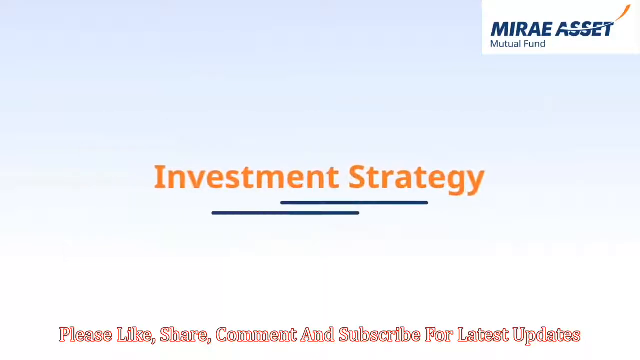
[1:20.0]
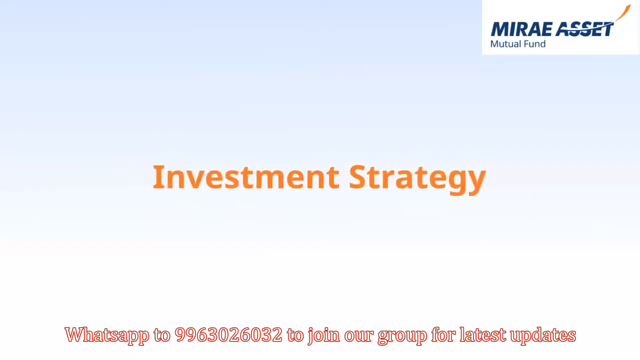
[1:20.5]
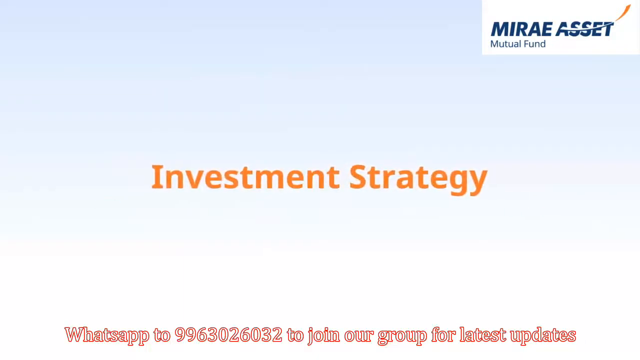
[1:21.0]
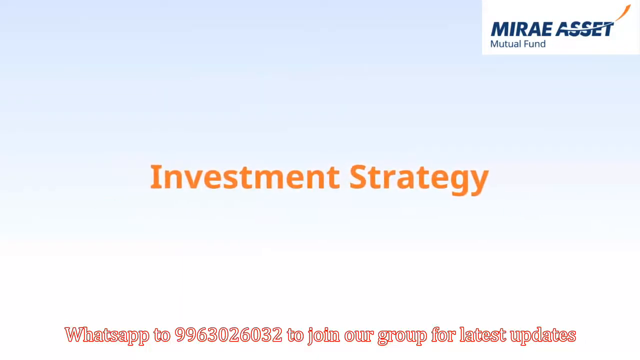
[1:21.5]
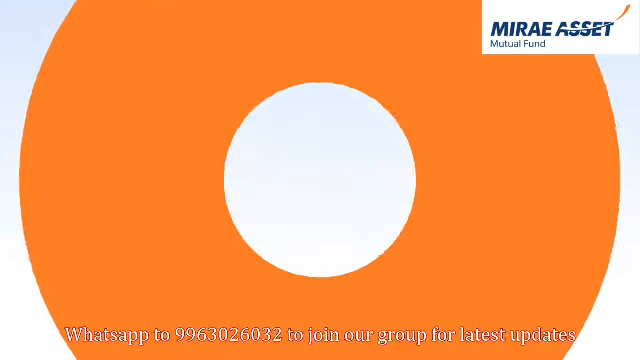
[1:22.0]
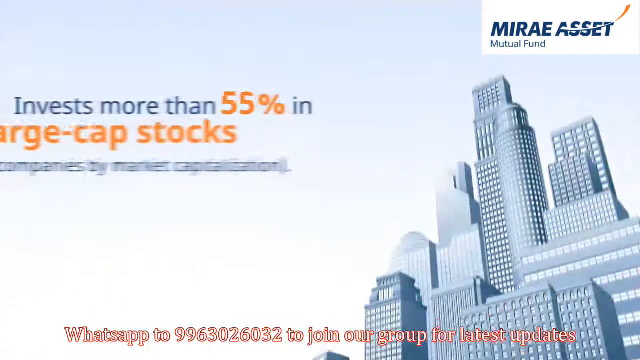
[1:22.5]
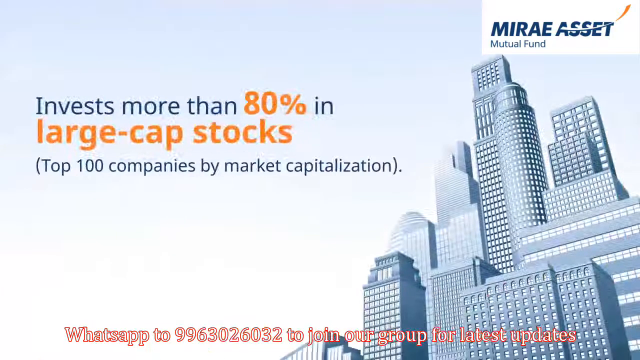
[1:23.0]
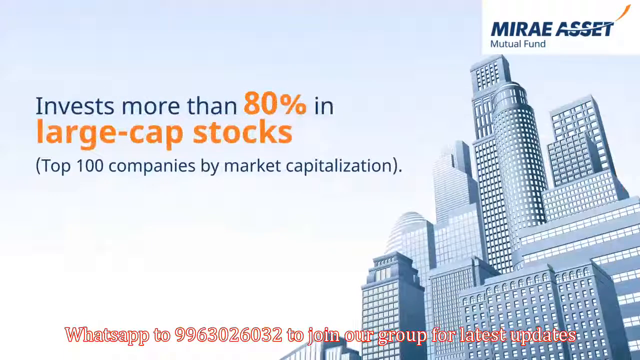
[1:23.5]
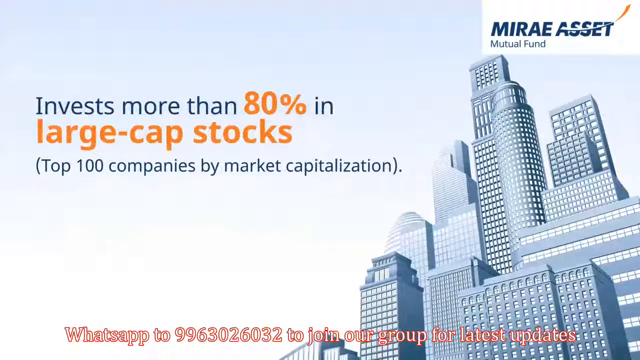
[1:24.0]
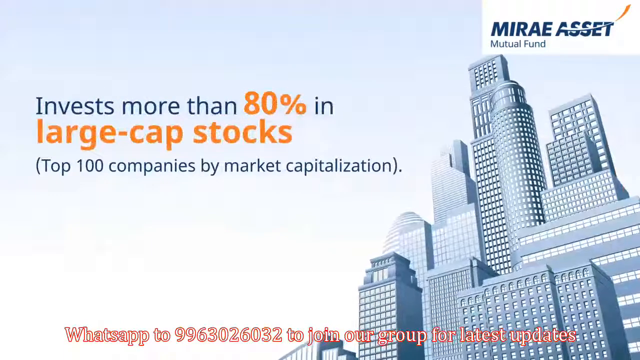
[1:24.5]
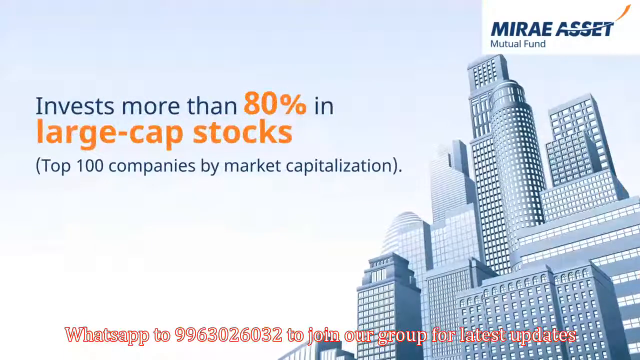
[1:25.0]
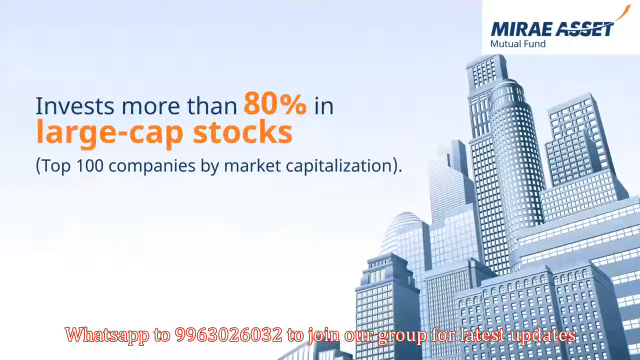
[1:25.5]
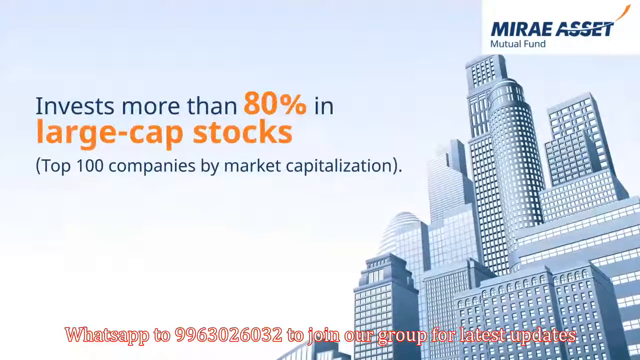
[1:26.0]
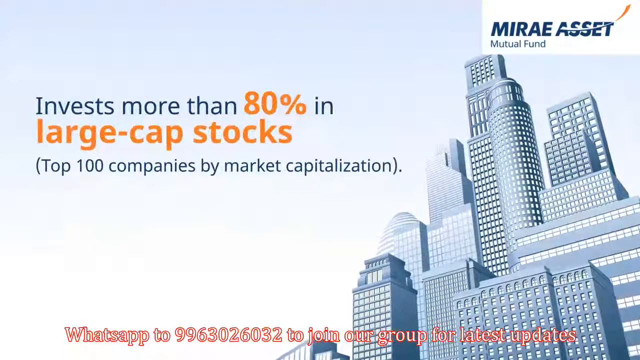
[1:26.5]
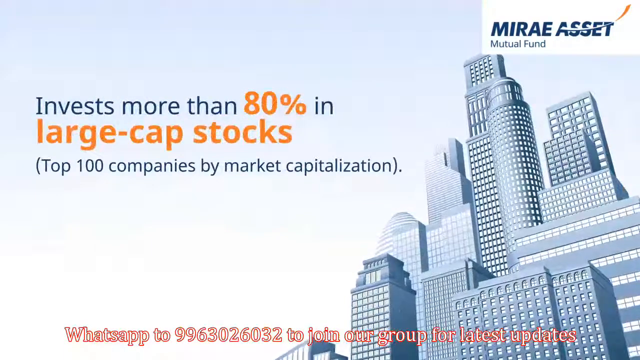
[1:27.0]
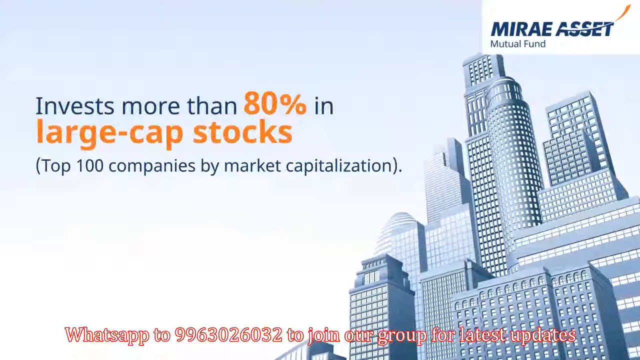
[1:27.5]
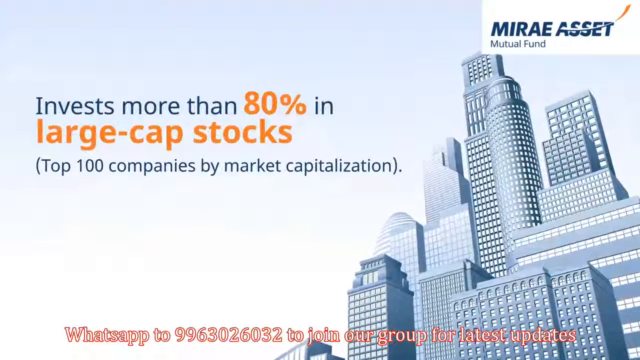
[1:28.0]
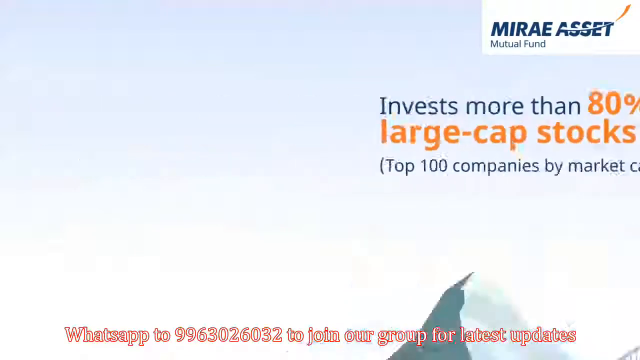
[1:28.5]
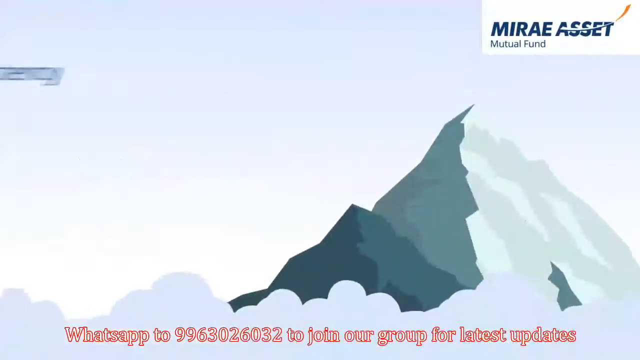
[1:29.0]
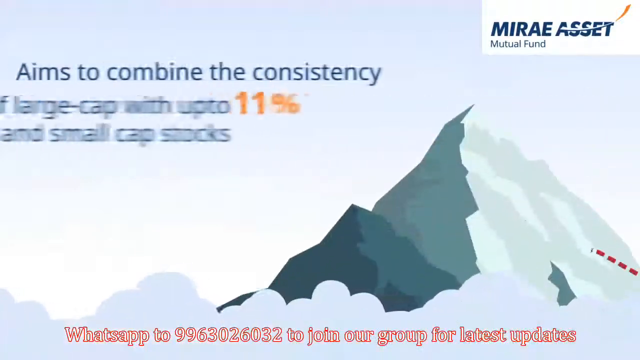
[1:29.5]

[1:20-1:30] An orange headline reading "investment strategy" is in the center of the screen, with two black lines under it. The background is gray, fading to a two-tone blackish gray at the very bottom, and the Mirae Asset Mutual Fund logo remains in the right-hand corner. A yellow bullseye opens up, and the screen then reads "invest more than 80% in large cap stocks", with "80%" and "large cap stocks" in orange; underneath, in smaller blue text in parentheses, it reads "top 100 companies by market capitalization". A city scene with silverish gray buildings clustered together on the right and in the center is on the screen. Another screen then begins to show the words "Aims to combine".